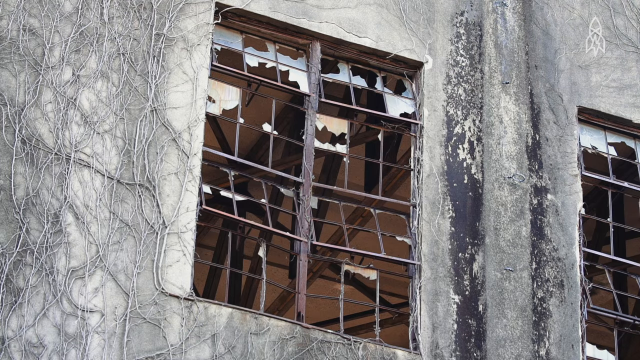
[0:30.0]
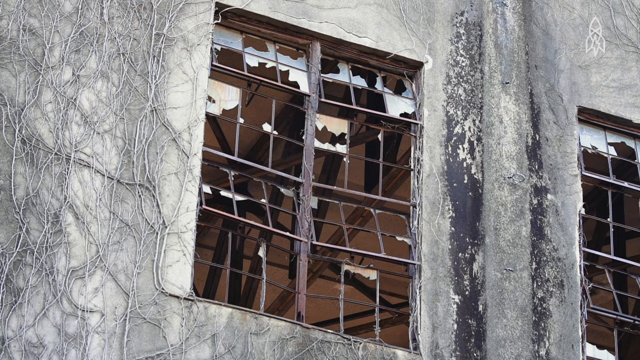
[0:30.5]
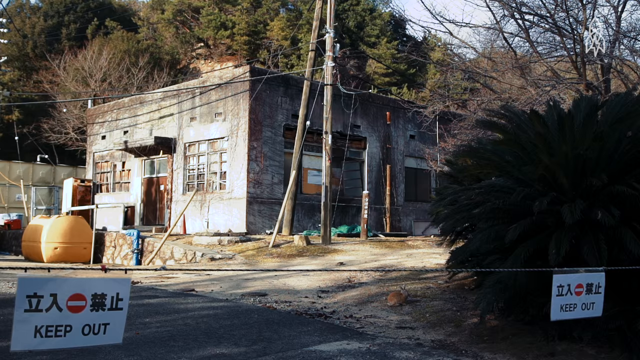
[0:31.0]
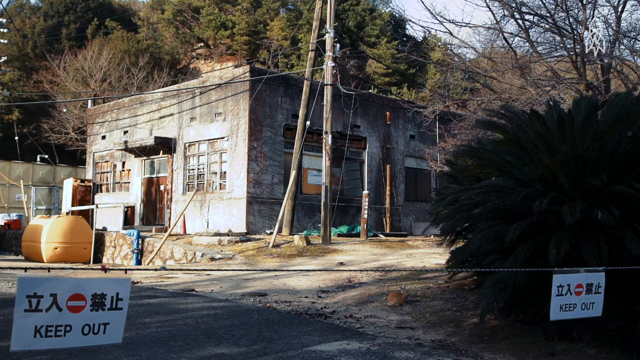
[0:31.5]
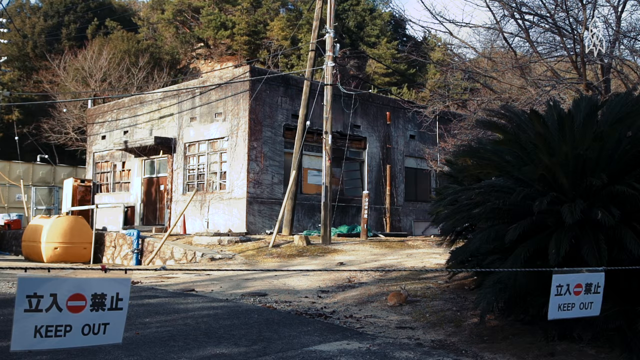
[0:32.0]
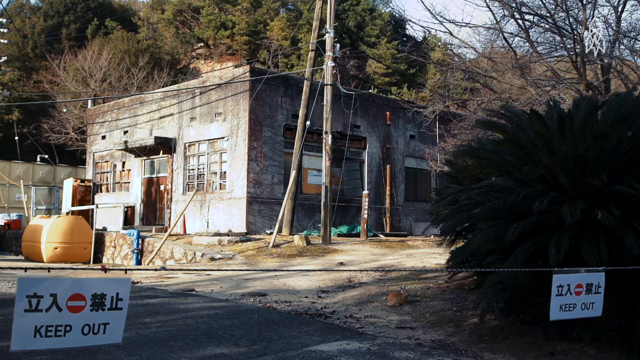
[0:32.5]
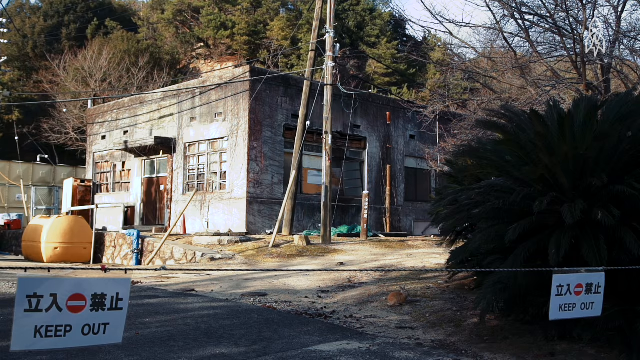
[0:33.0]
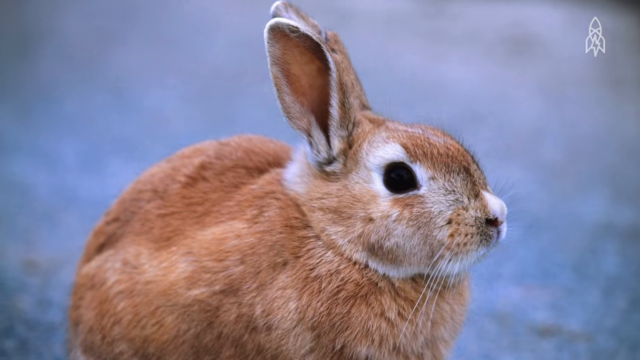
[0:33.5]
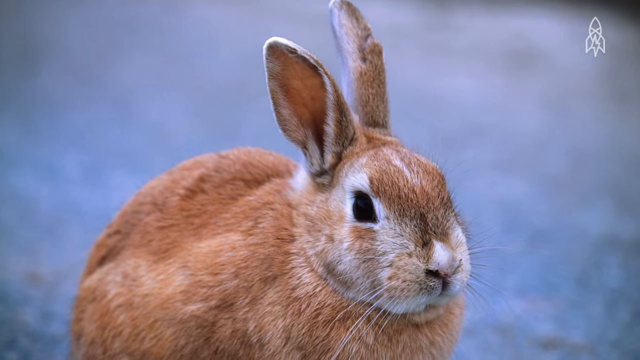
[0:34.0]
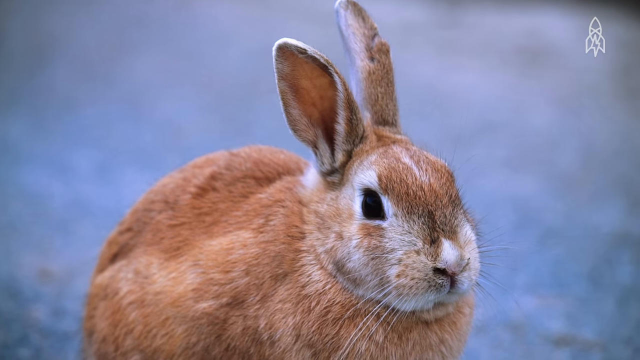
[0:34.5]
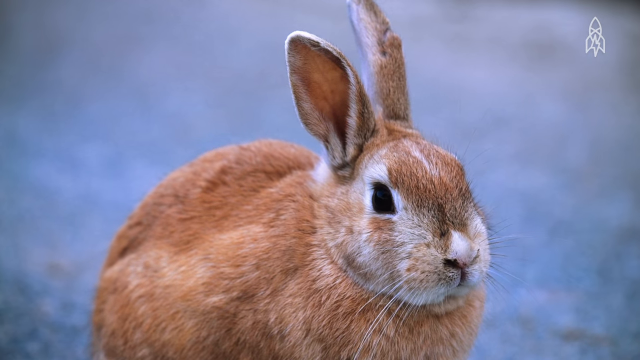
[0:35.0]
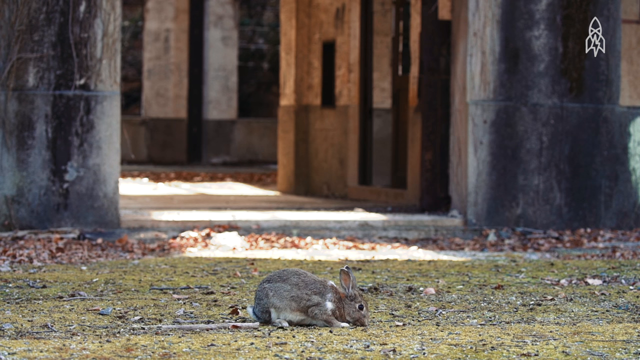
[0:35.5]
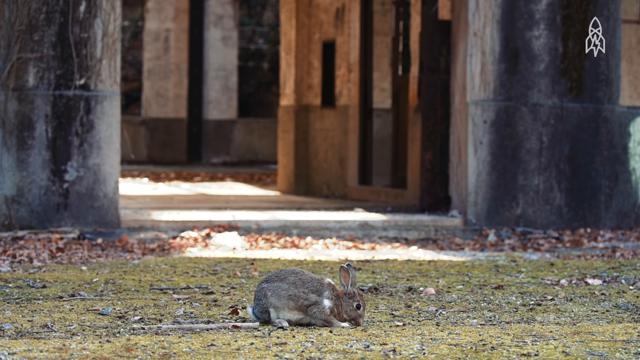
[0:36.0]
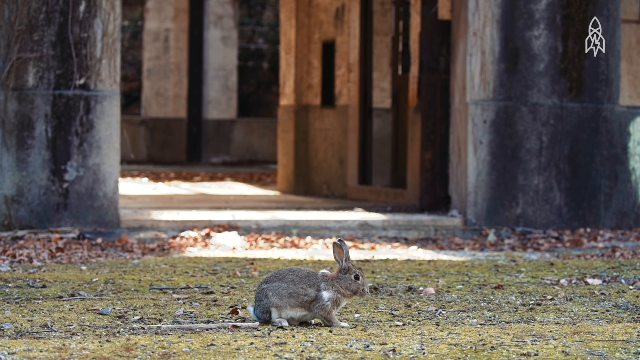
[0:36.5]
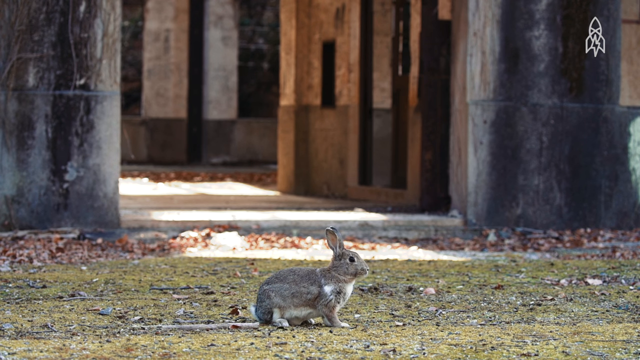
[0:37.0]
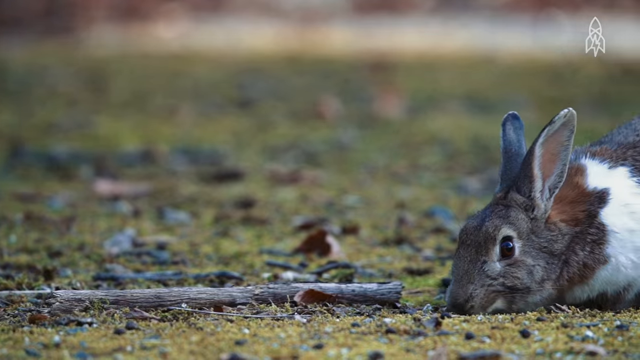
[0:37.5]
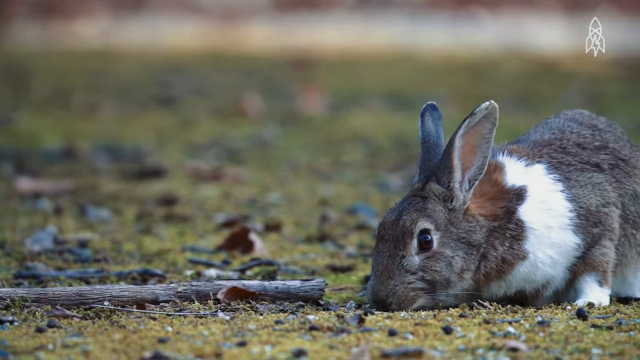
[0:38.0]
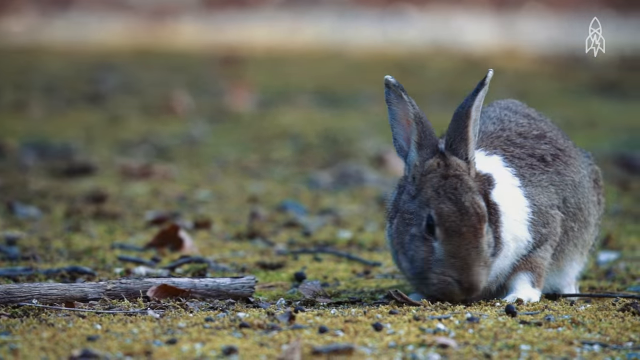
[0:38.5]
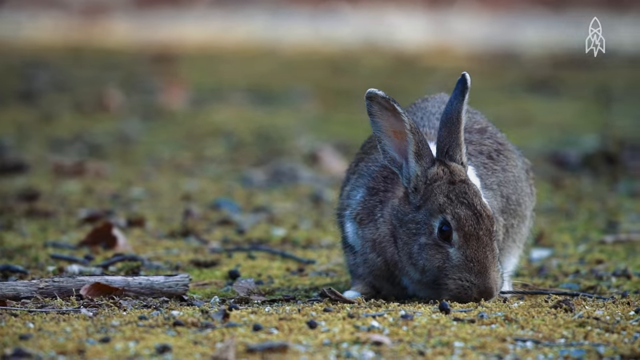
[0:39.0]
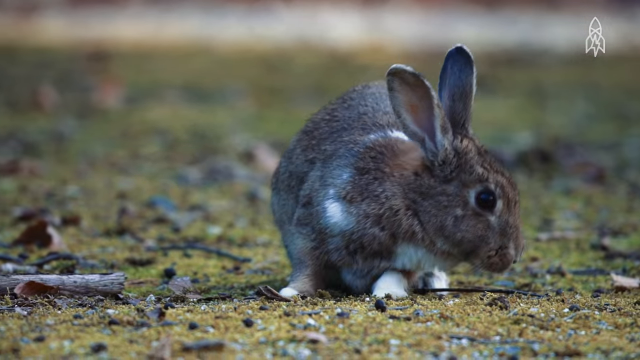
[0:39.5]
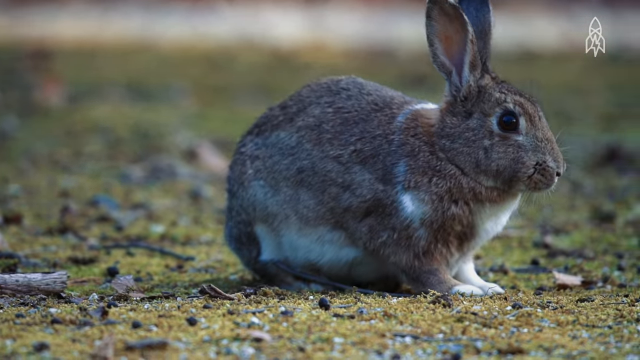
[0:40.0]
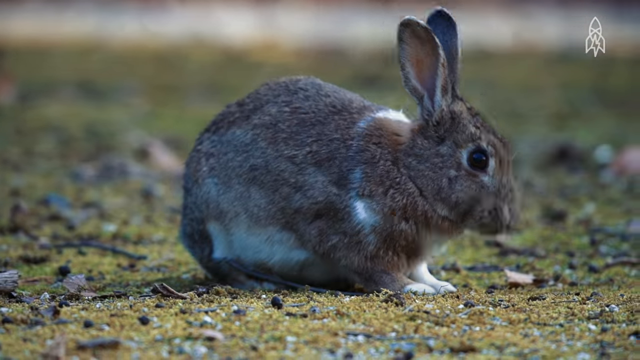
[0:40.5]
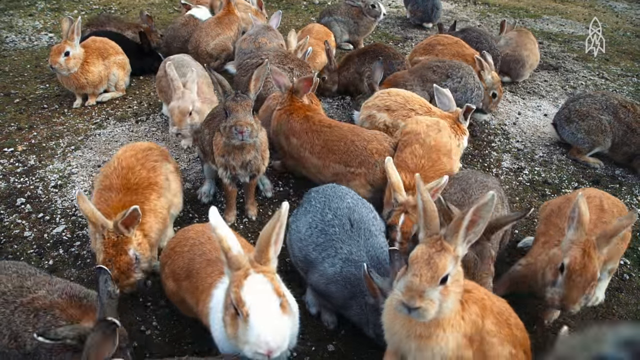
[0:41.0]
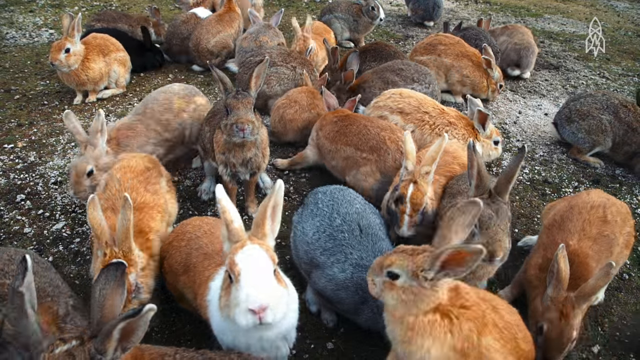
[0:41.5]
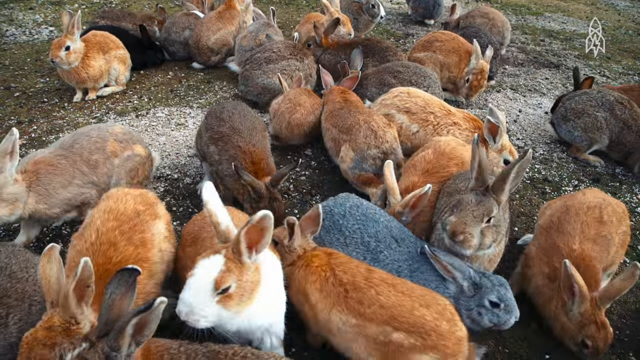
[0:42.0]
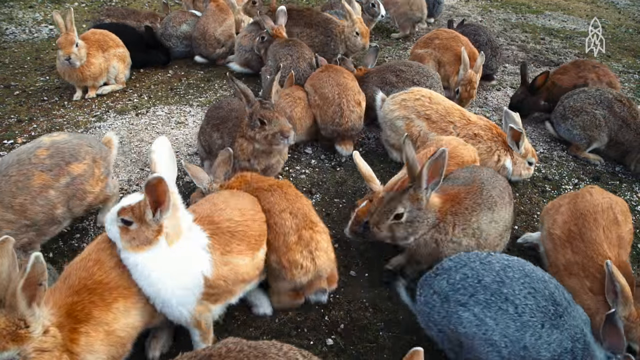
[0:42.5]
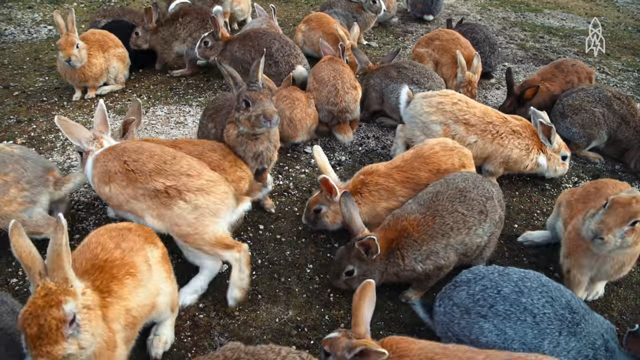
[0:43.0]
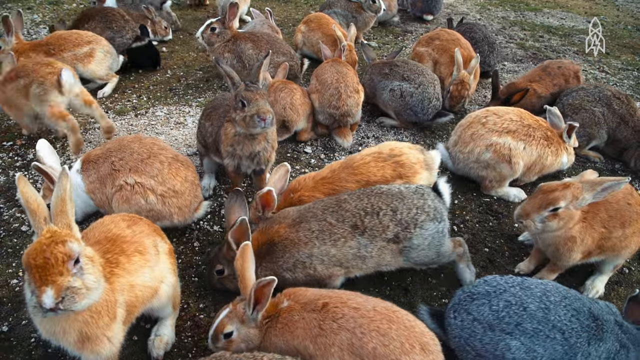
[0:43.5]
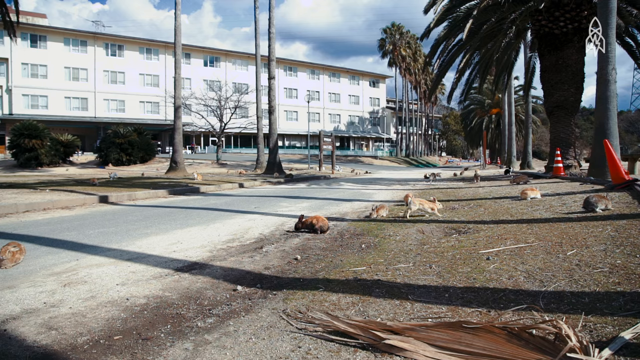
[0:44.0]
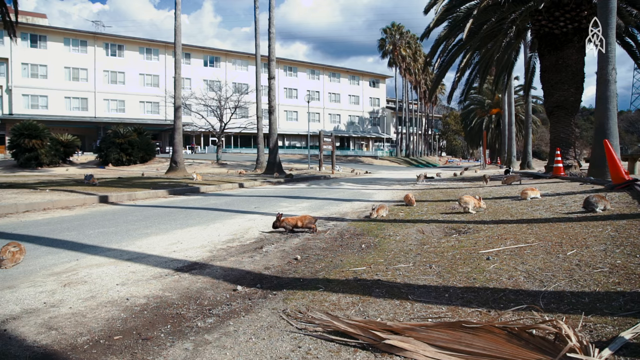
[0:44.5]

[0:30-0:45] A still shows abandoned buildings, followed by different bunnies in different places that look like they are trying to get something to eat. There are many bunnies everywhere in the area, which looks as if the bunnies have occupied it as their habitat. Many of the bunnies are brown, some are gray, and some are other colors; the brown bunnies outnumber the gray ones.